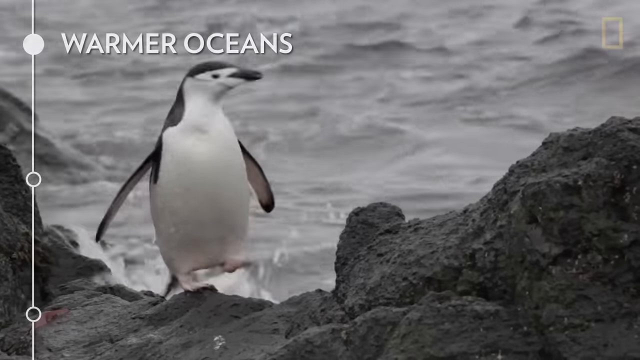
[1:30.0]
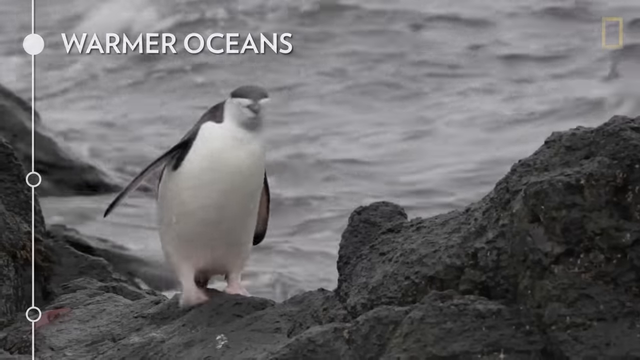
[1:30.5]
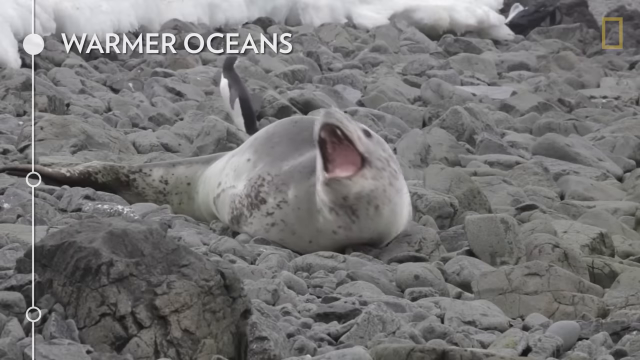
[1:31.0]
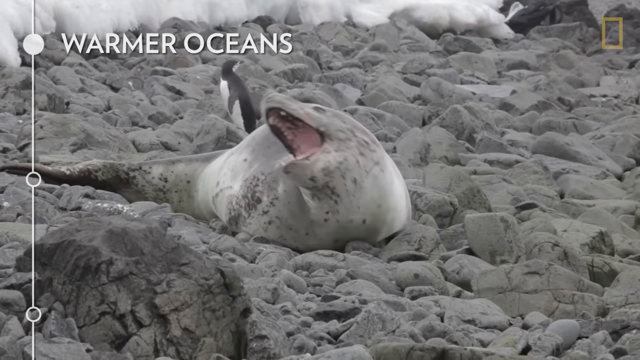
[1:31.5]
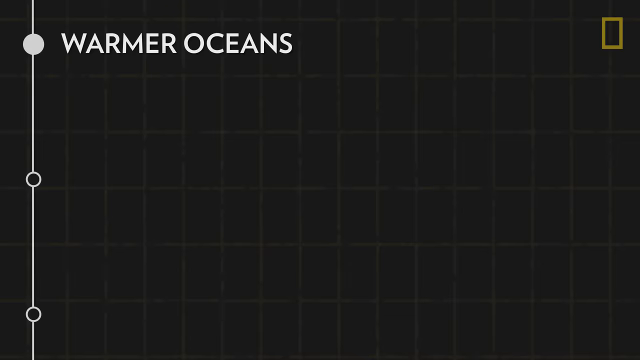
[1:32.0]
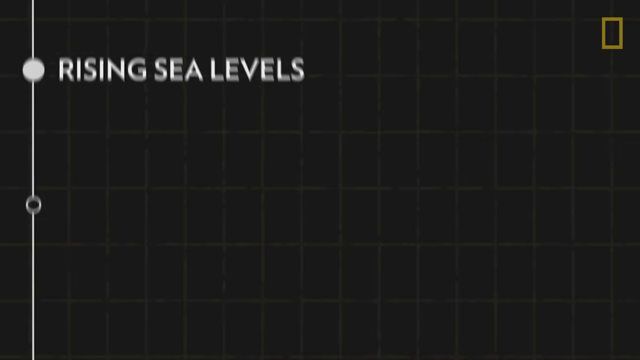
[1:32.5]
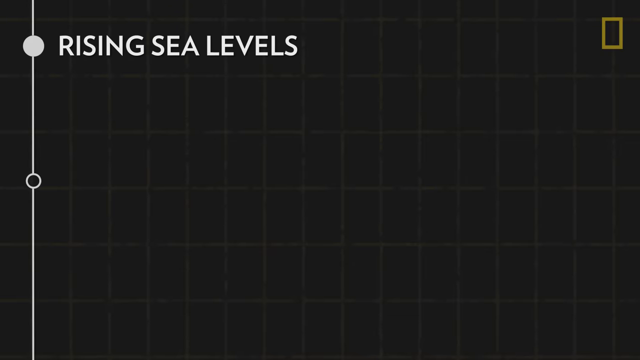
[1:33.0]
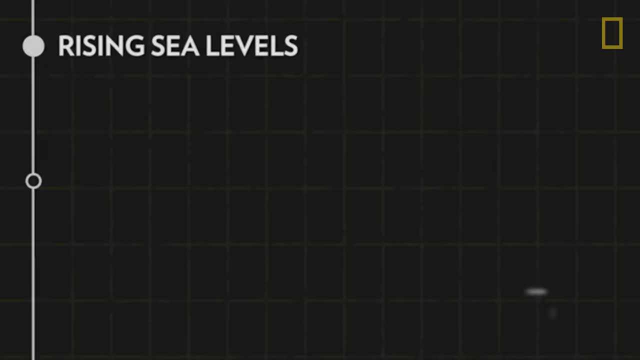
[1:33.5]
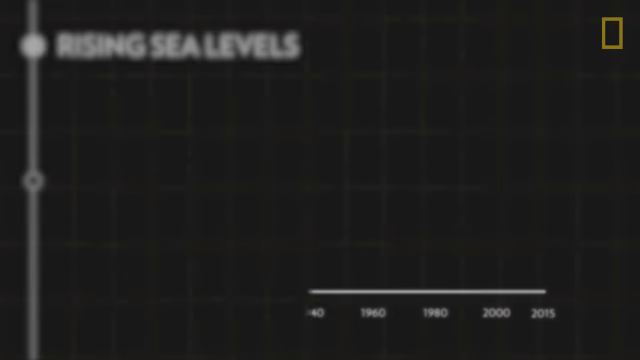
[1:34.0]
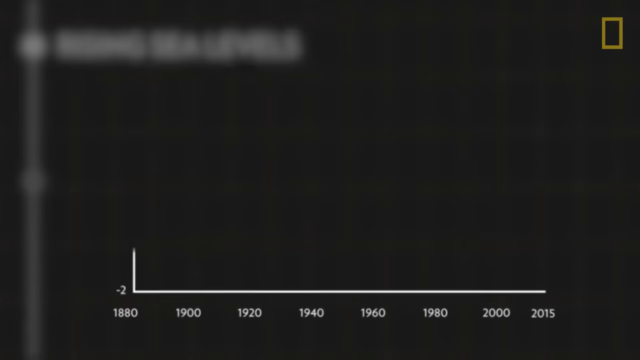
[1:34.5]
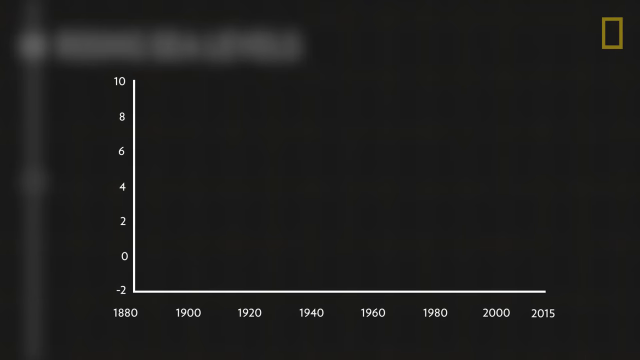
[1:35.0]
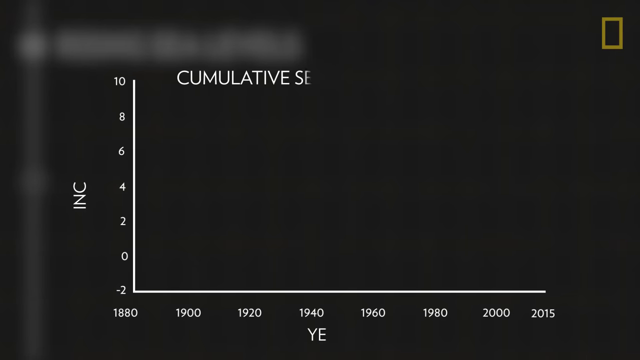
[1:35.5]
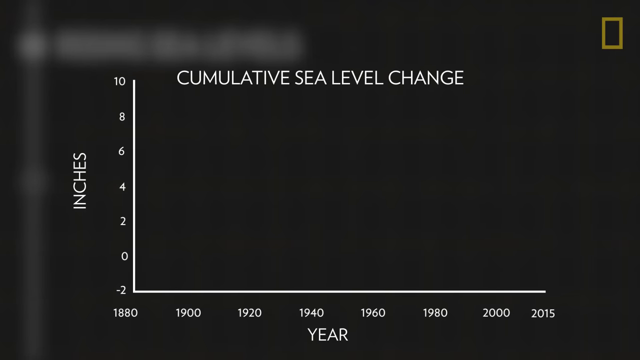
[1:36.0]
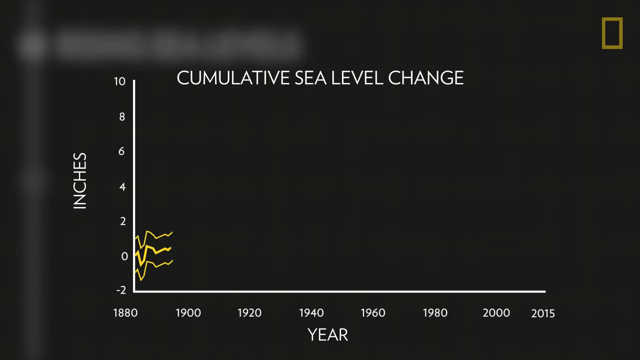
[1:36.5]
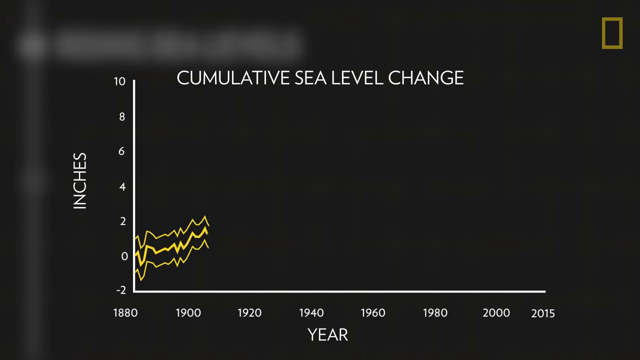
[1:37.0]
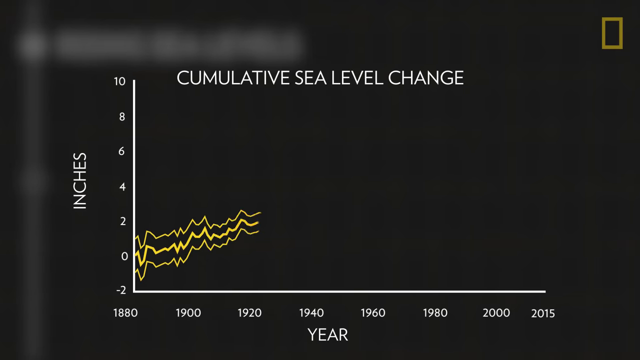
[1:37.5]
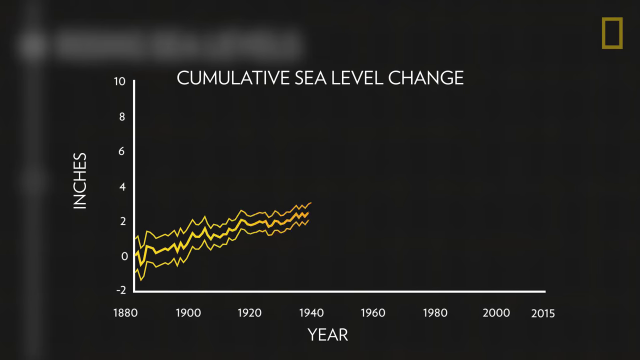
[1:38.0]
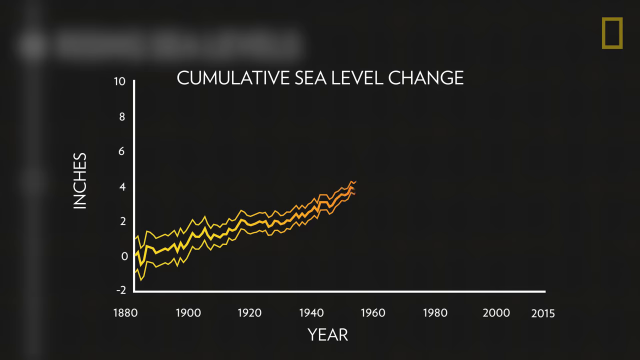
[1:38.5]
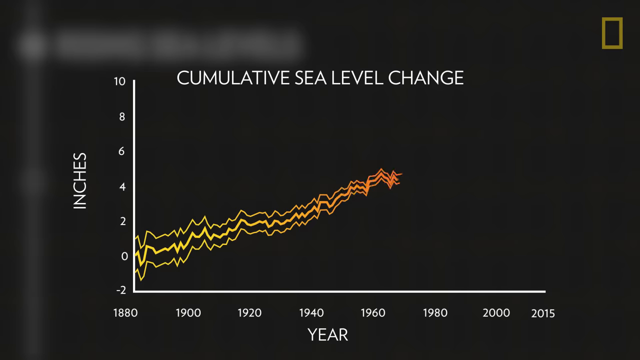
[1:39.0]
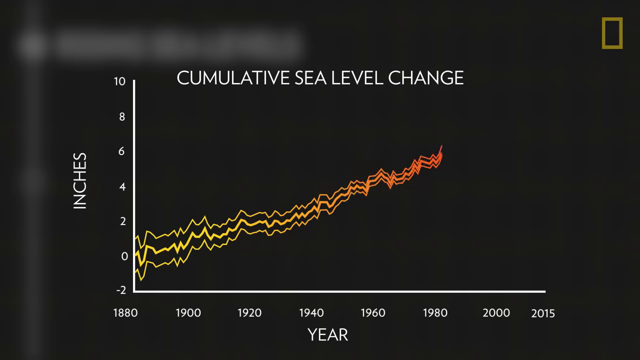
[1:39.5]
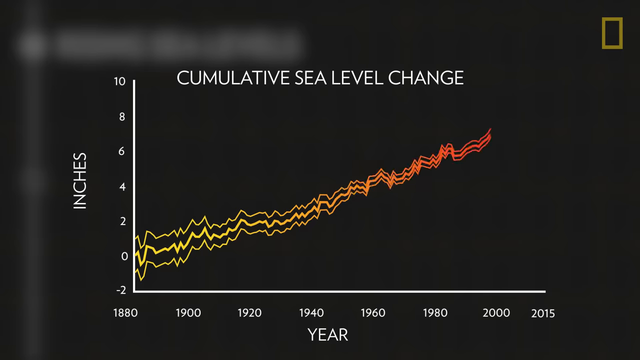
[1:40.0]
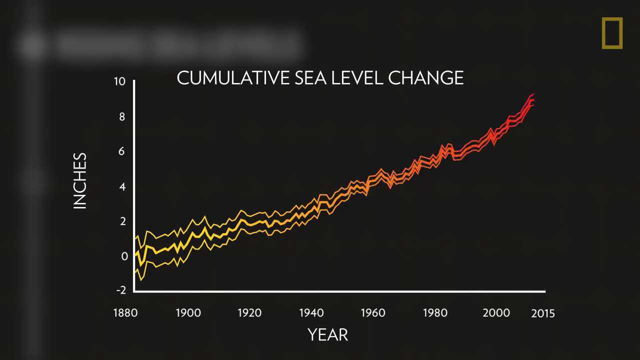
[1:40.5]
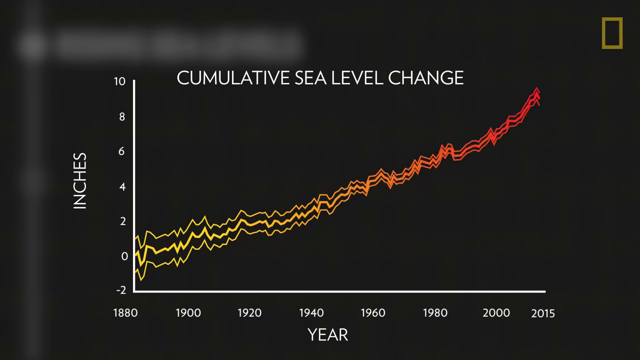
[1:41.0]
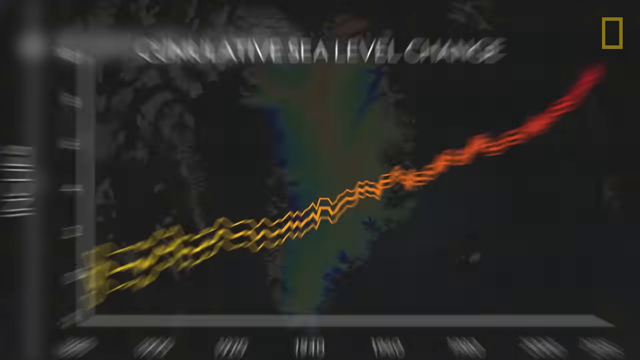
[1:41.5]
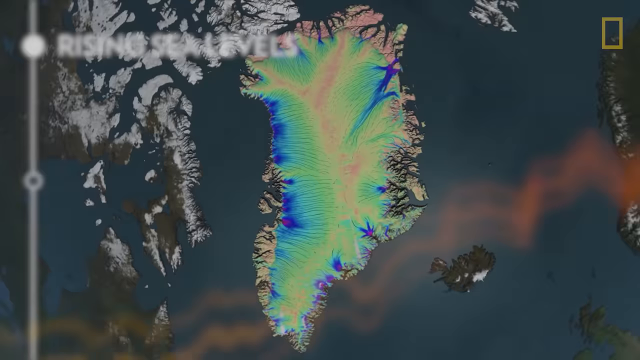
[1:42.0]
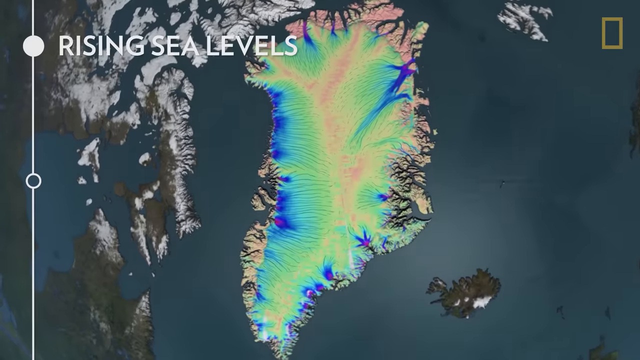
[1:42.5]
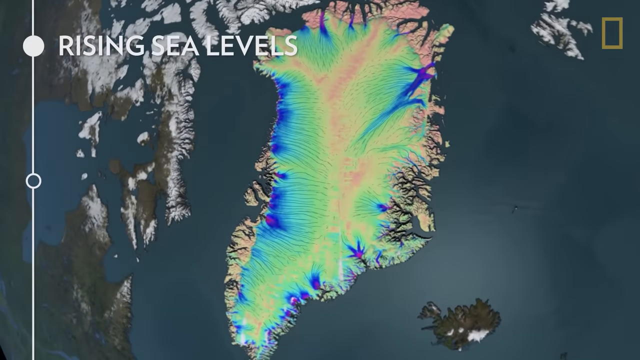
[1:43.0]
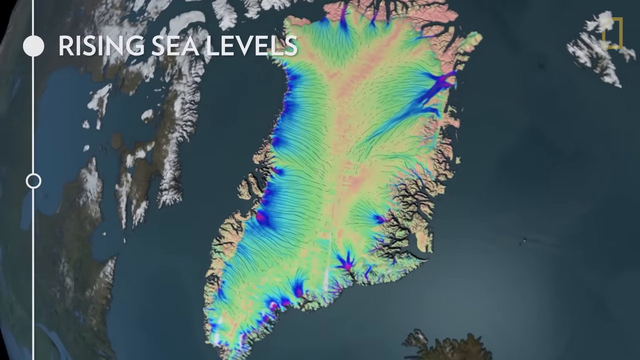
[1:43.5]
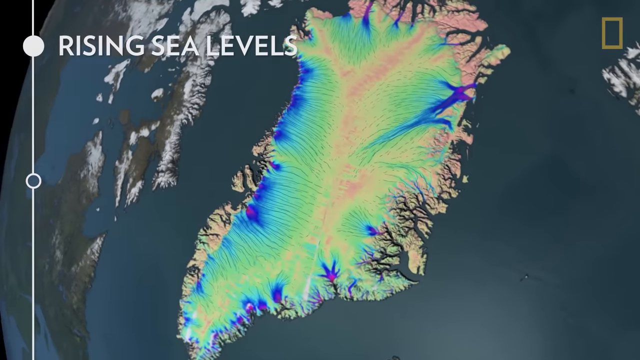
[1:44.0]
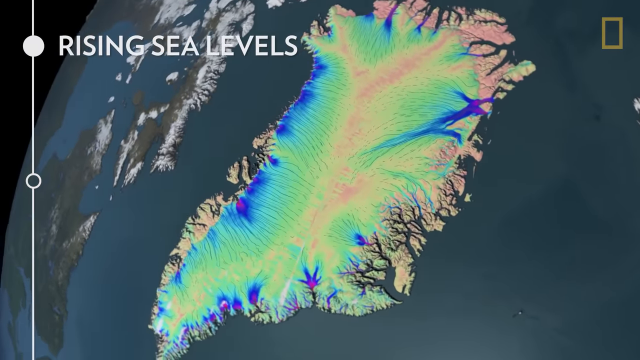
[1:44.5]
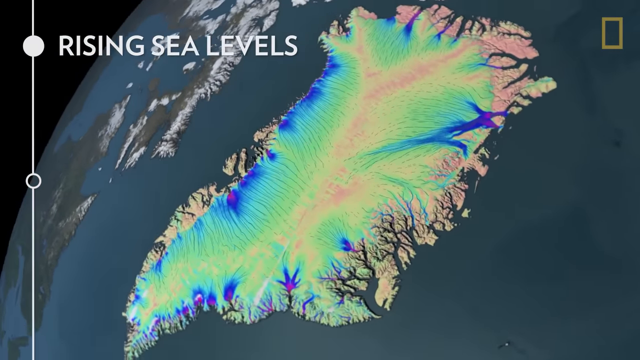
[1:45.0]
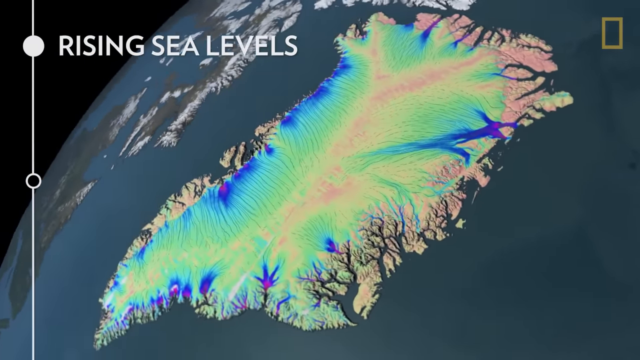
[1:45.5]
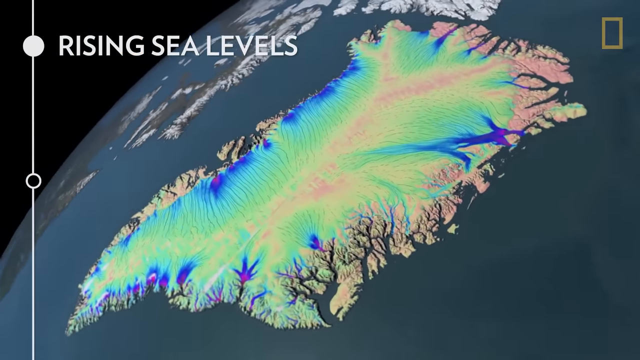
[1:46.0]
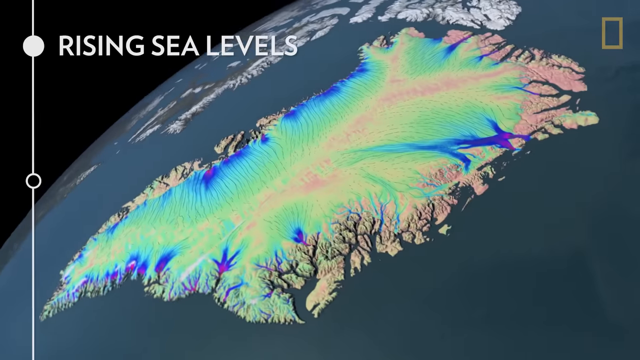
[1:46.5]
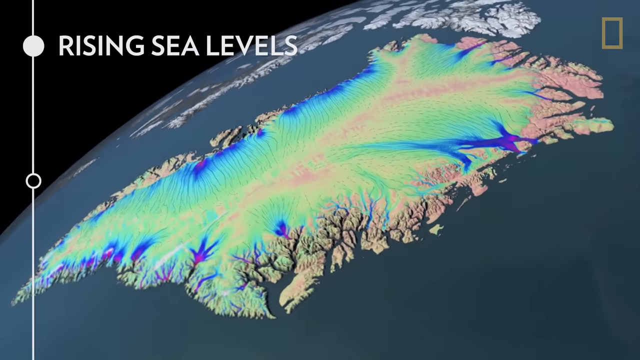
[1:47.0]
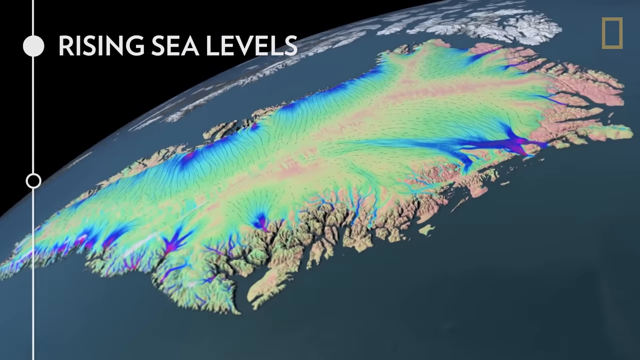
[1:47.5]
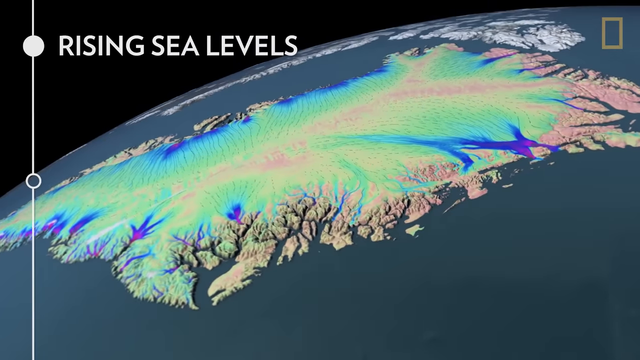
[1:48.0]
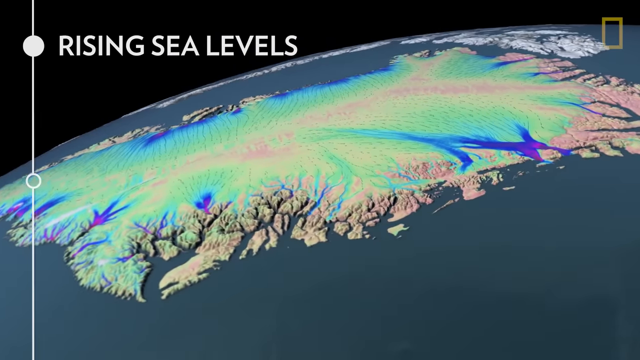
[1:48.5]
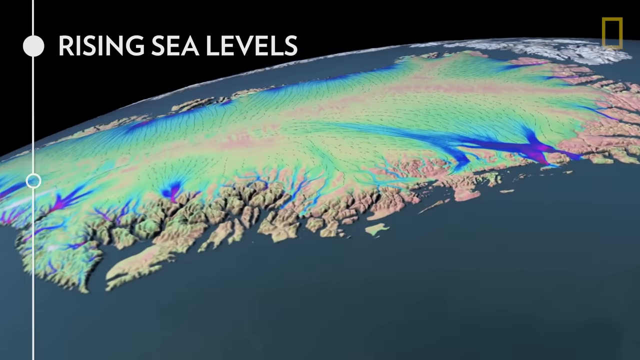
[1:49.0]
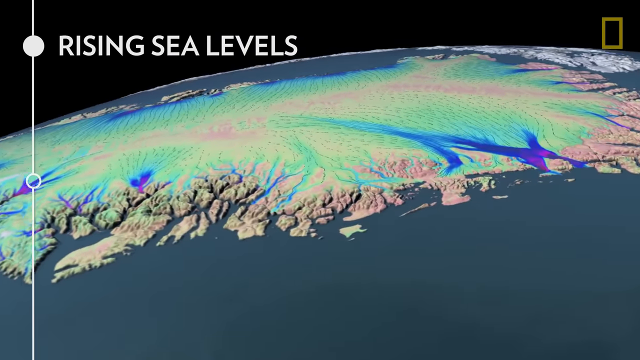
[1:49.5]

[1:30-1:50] A seal is in the middle of a bunch of rocks, its body facing around the five o'clock position and its head facing around seven o'clock with its mouth open. It looks like it is pulling out, and the shot goes away. The screen turns black except for the National Geographic logo in the upper right, and in the upper left white capital letters read "rising sea levels." A graph is then inserted onto the black background, erasing everything else; the y-axis on the left reads "inches," and what look like dates run along the bottom. Three lines, yellow, orange and red, are drawn out as the video plays, increasing from left to right. The video then changes to an aerial view looking down on a mass of land, basically like a map, with land in the middle and water on the left and right. The land has different colors around it, such as blue, green, yellow and red, likely indicating temperatures or something similar.